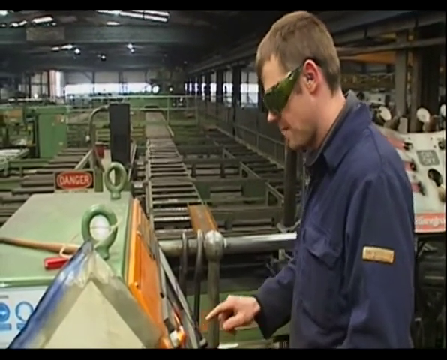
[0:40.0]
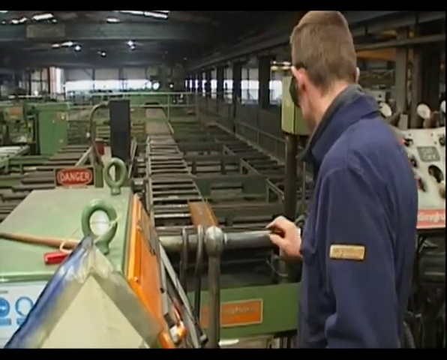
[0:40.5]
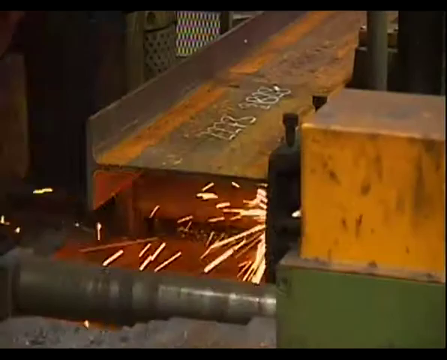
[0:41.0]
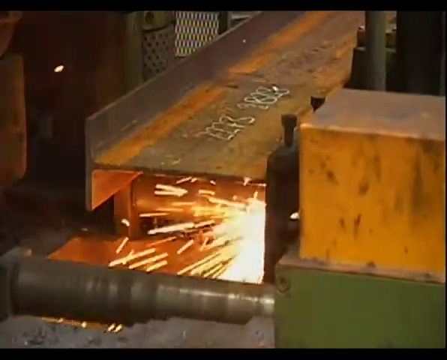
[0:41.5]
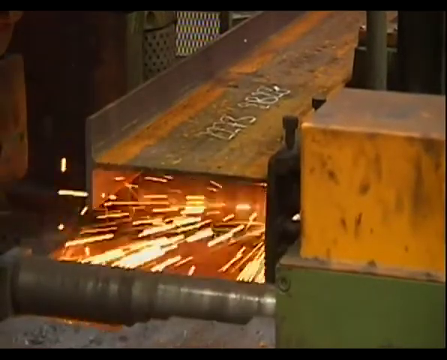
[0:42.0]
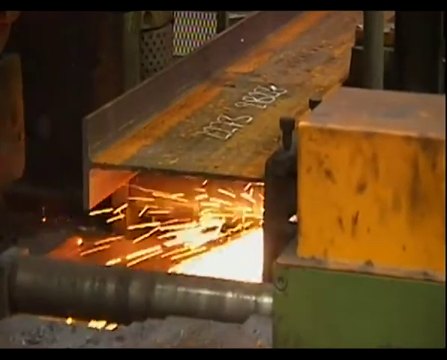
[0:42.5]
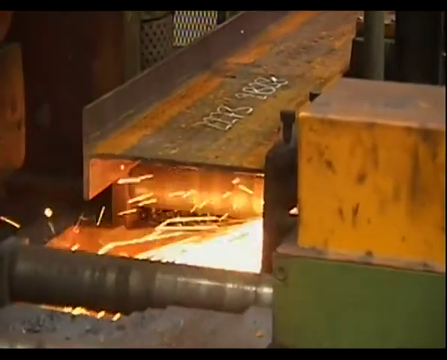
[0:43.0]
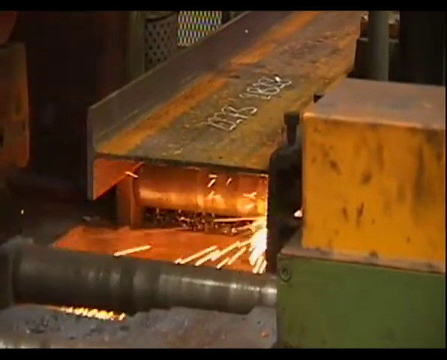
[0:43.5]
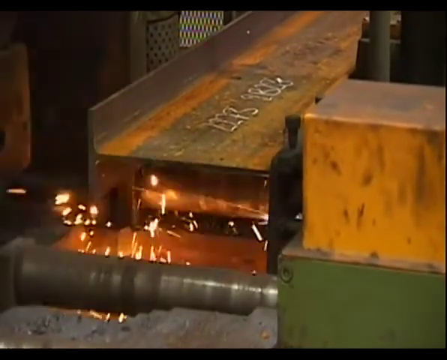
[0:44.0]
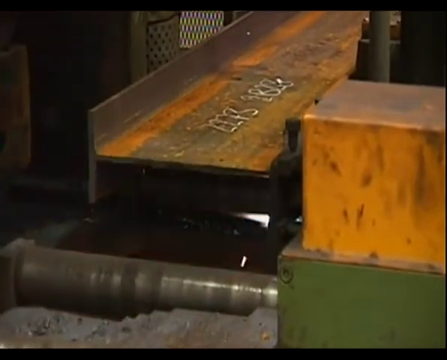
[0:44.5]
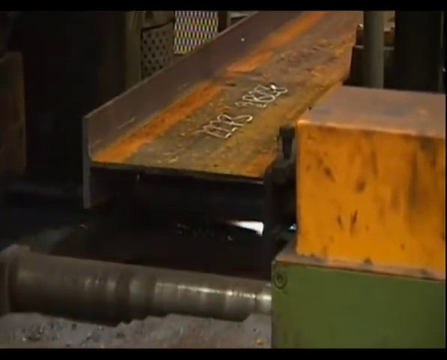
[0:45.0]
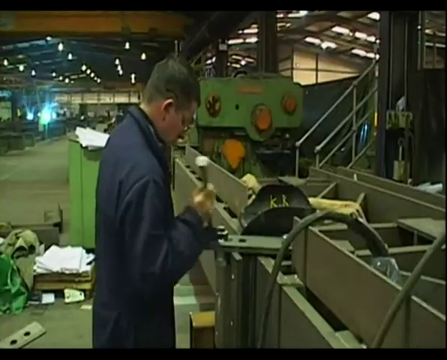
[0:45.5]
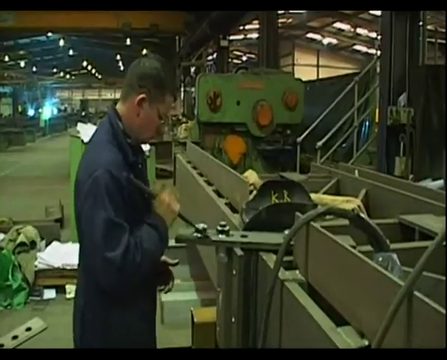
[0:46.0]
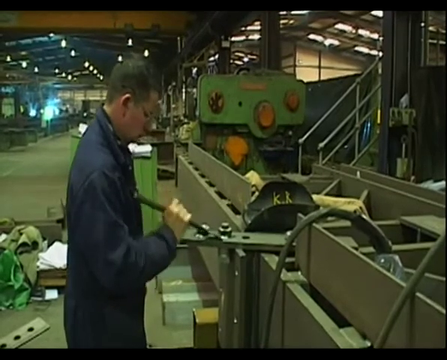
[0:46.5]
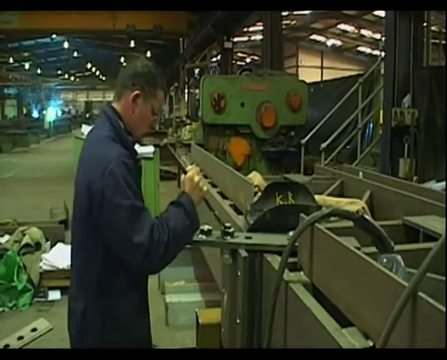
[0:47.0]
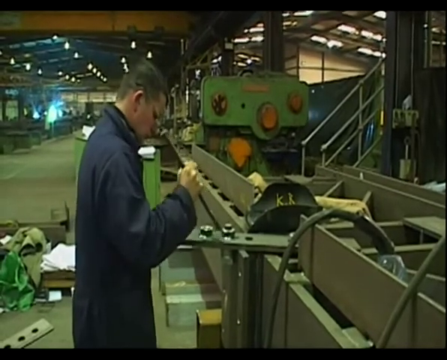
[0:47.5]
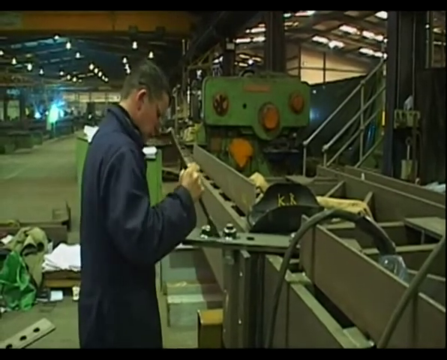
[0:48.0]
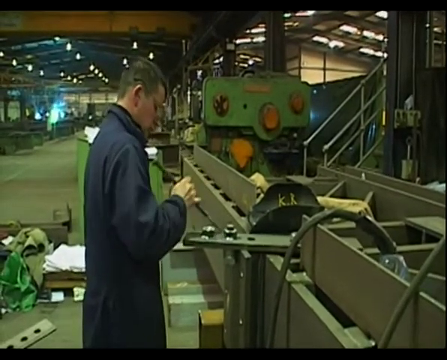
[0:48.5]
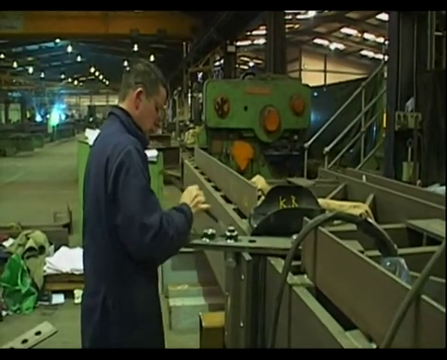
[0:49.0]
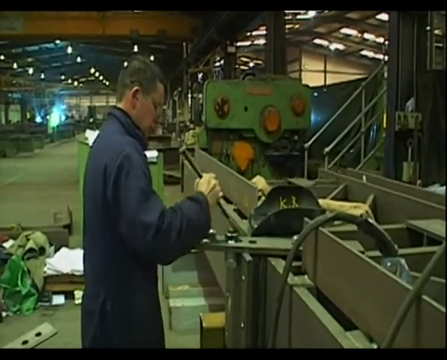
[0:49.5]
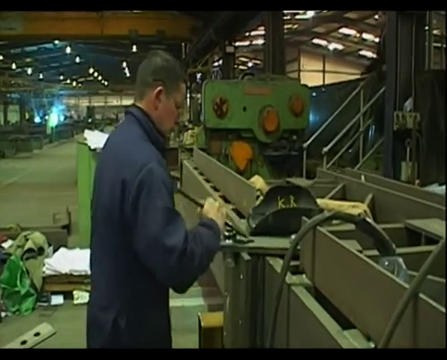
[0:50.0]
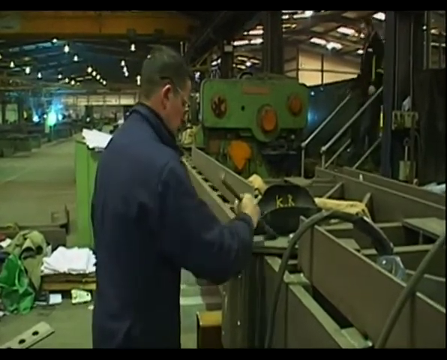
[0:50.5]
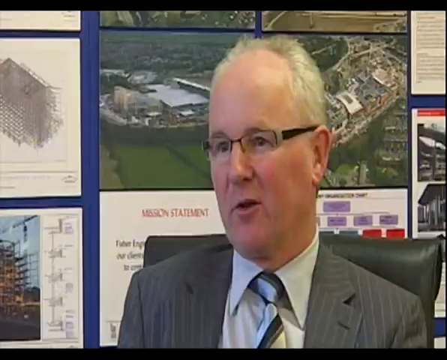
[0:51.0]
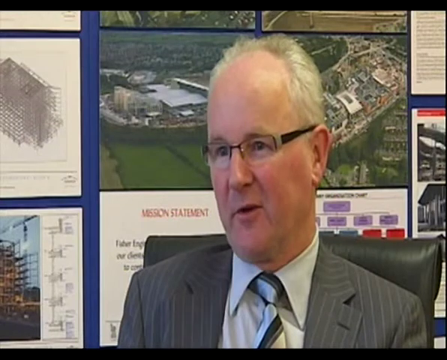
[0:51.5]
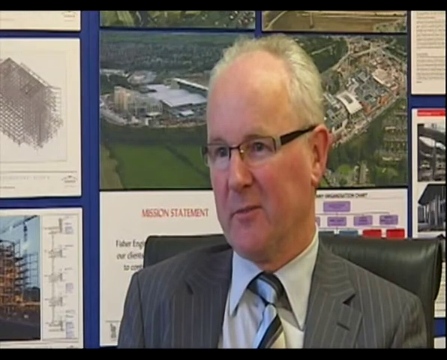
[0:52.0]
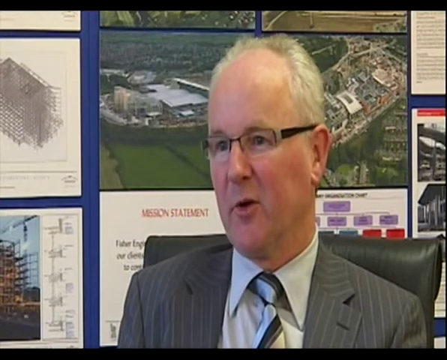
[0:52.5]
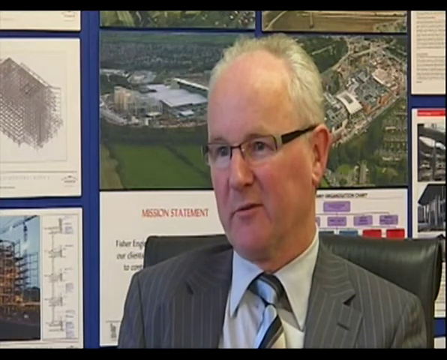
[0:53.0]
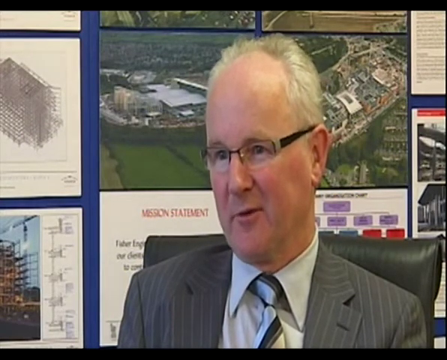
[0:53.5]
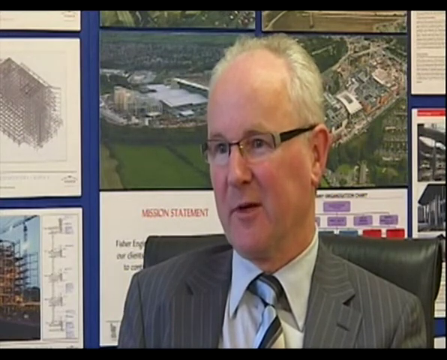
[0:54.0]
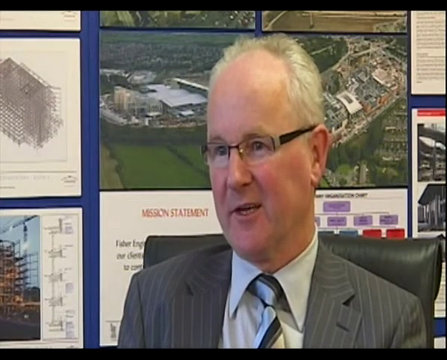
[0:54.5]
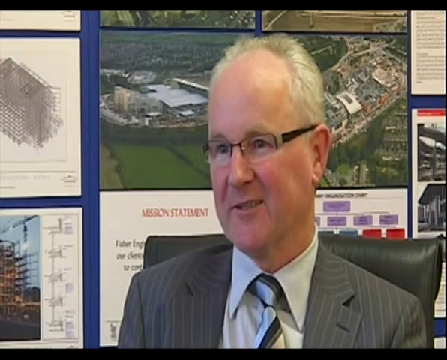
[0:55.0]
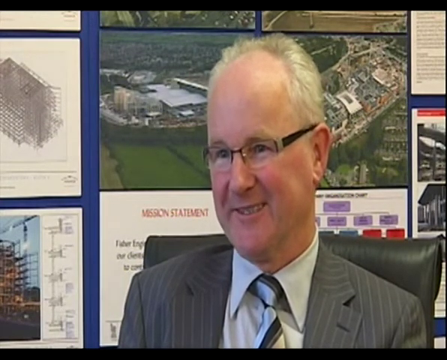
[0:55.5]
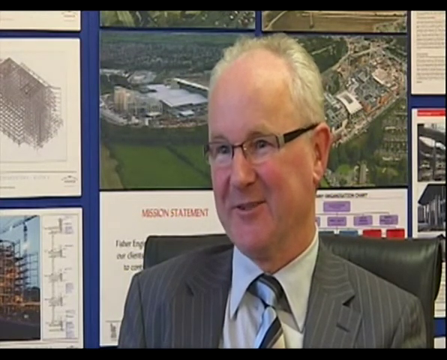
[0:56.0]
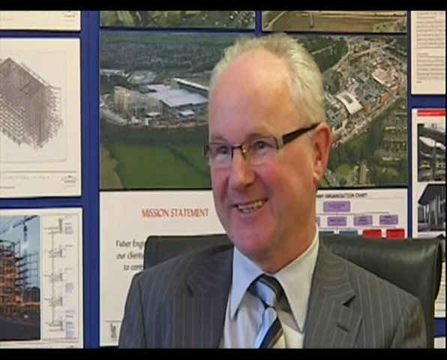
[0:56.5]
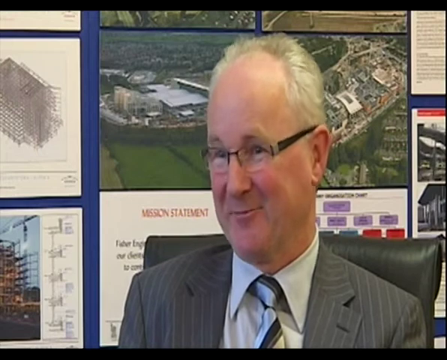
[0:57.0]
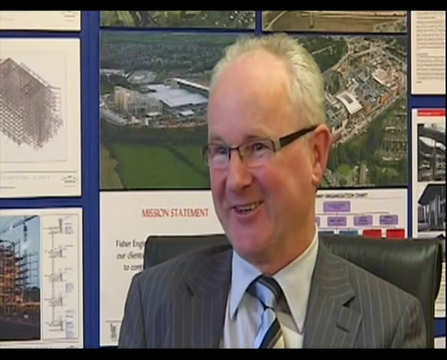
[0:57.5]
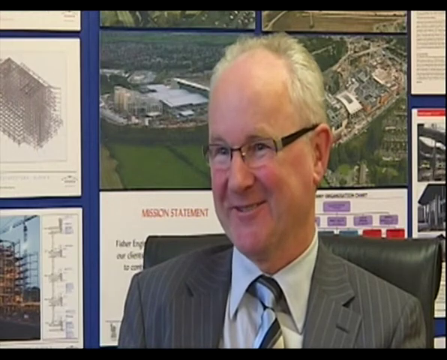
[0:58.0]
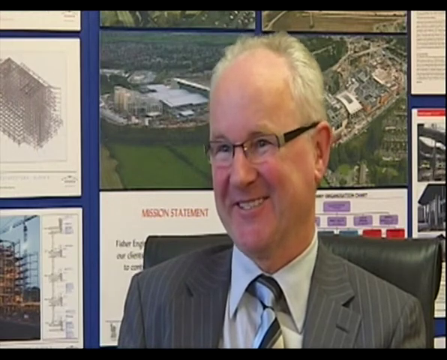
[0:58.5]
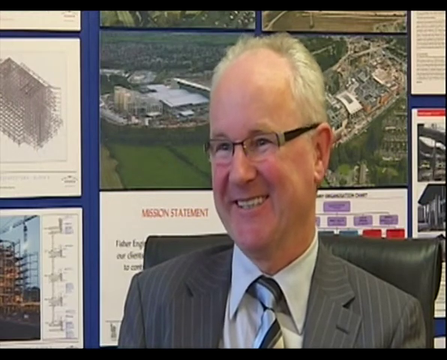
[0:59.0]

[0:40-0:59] A factory worker, apparently on the right side, wears green goggles and a blue factory worker suit and has short hair. He presses a panel at the bottom left of the frame, on what looks like a green machine with orange in the panel and some buttons, using his right hand with the index finger outstretched. He then turns around and looks toward the back; the background appears to be a factory, with many metal beams on the floor and many metal beams running across the roof. The video then transitions to what looks like a metal beam being cut apart, with many sparks flying across it; a yellow and green rectangle at the bottom right covers the sparks, and sparks come out of it. Another scene shows another factory worker in the same blue factory worker suit, holding what looks like some sort of scraper in his right hand and scraping around a bolt on a metal plate, which looks like a long conveyor belt. The video then changes to what looks like an interview with an older man. He wears glasses, looks to be in his 60s or 70s, is Caucasian and has short white hair. He faces the camera and a bit to the left, and wears a gray suit with white stripes, a white shirt, and a blue, black and white striped tie. In the background are some pictures of buildings and things like mission statements. He sits on a black leather chair, talking toward the camera and a little to the left, and he smiles, smiling more as he keeps talking.